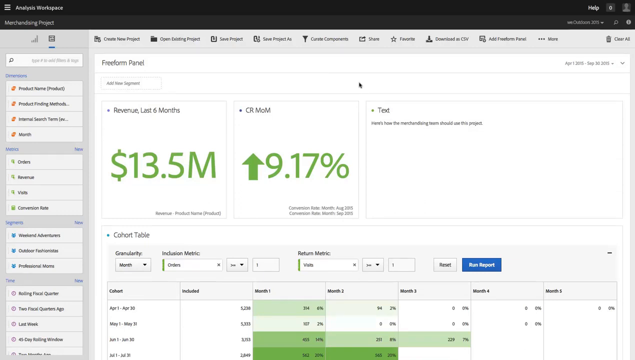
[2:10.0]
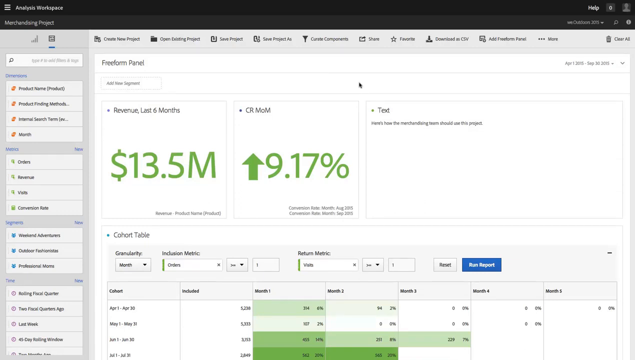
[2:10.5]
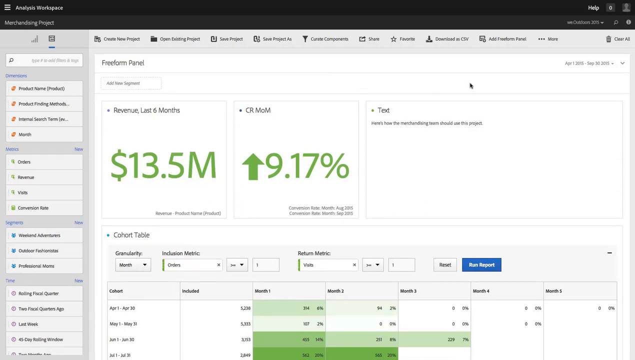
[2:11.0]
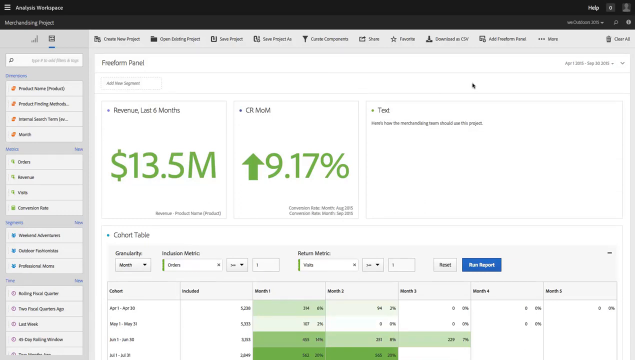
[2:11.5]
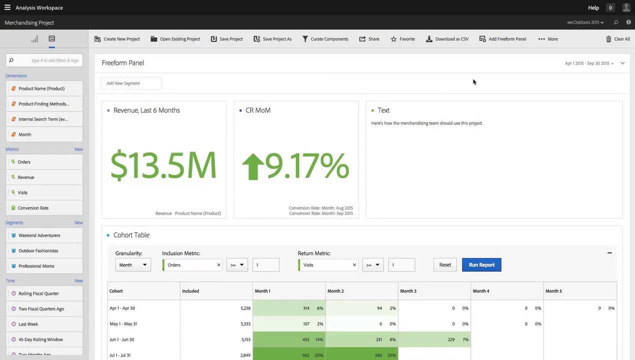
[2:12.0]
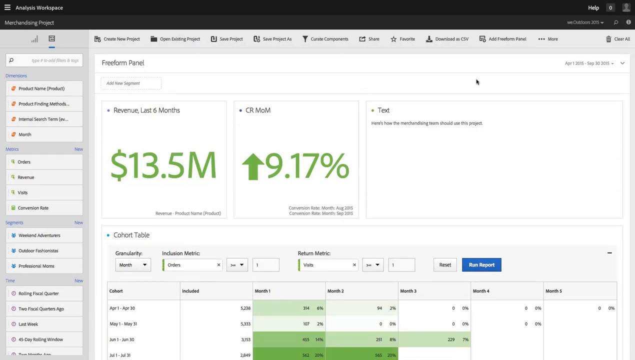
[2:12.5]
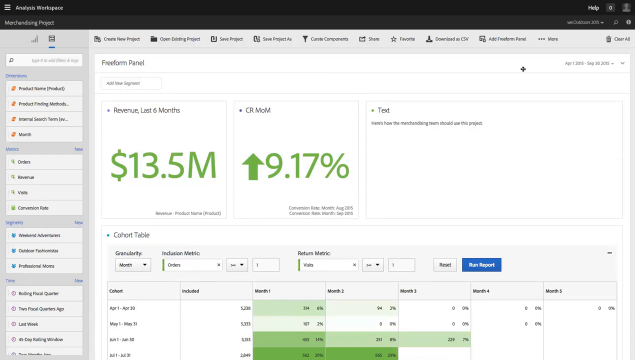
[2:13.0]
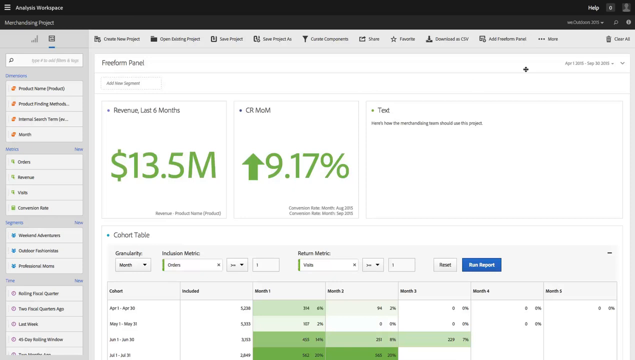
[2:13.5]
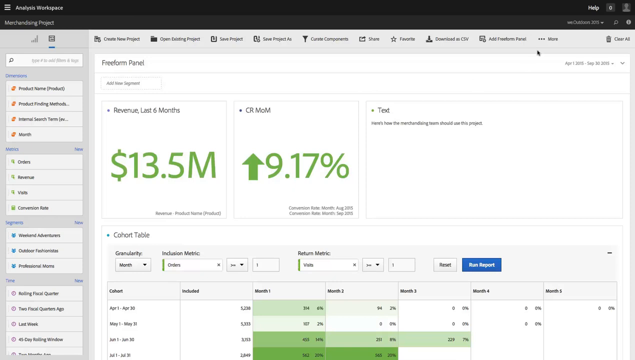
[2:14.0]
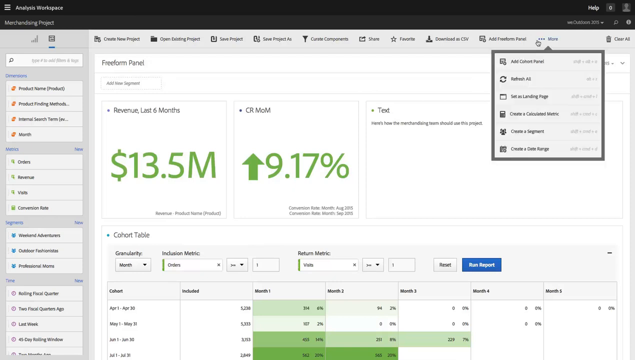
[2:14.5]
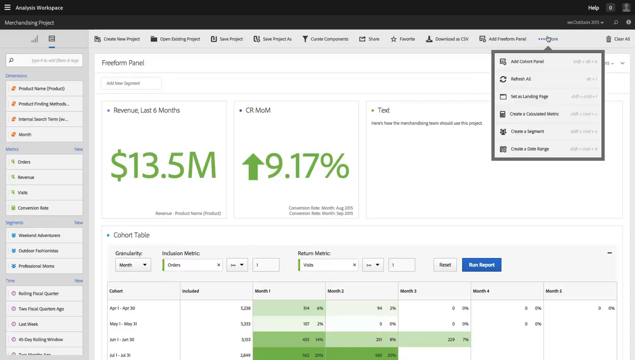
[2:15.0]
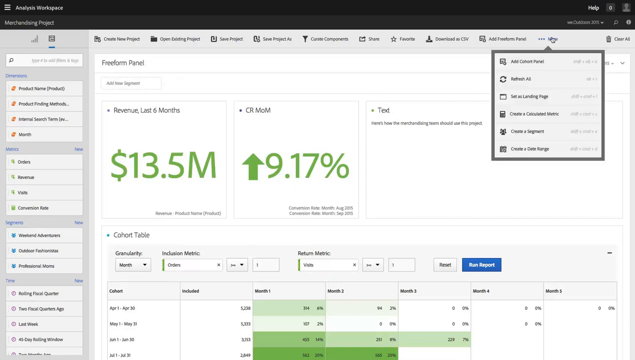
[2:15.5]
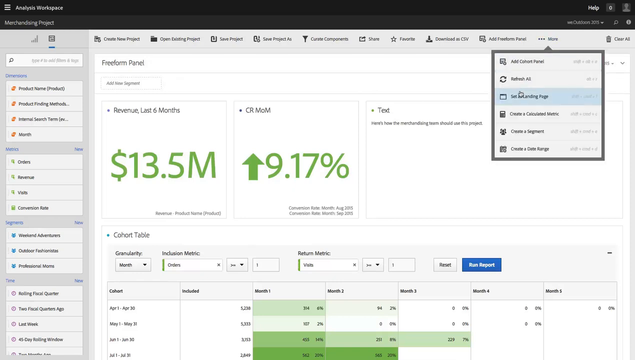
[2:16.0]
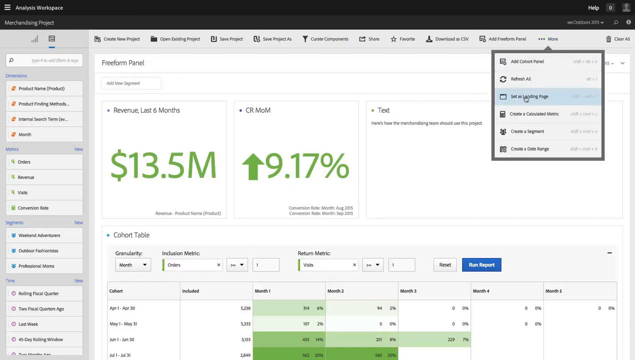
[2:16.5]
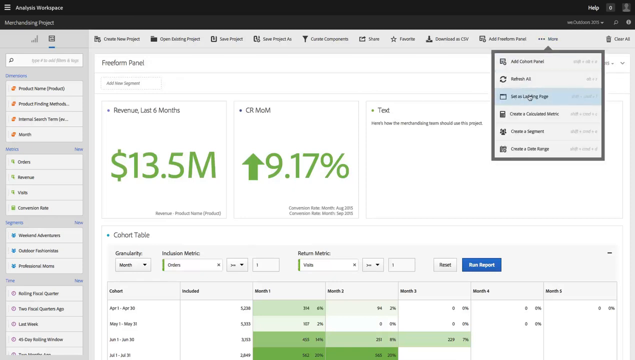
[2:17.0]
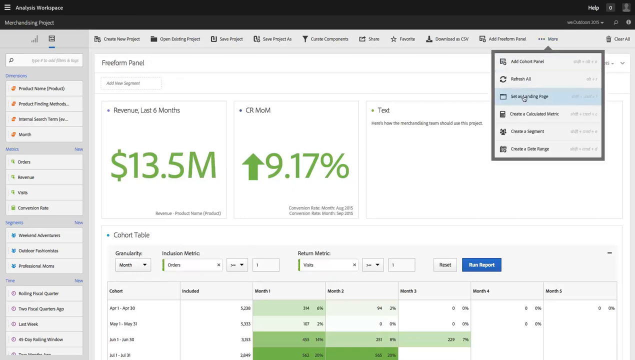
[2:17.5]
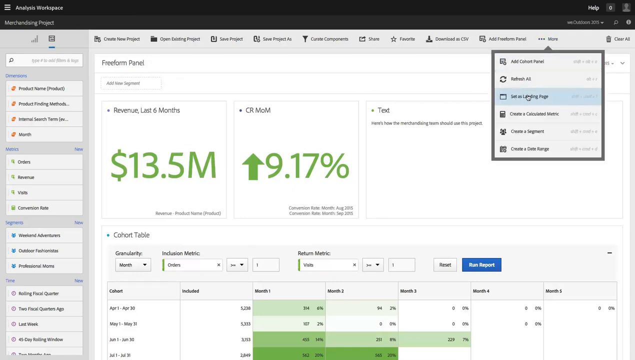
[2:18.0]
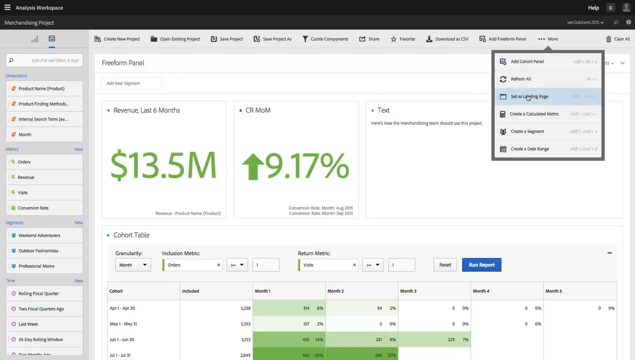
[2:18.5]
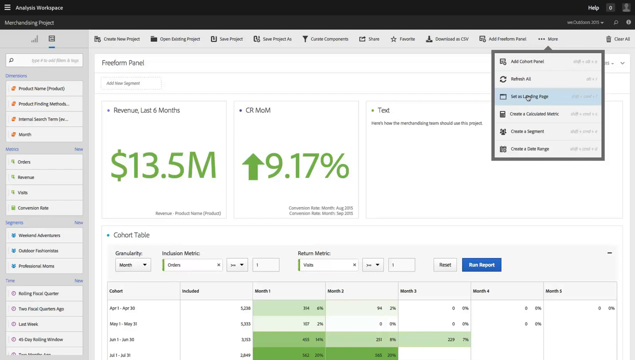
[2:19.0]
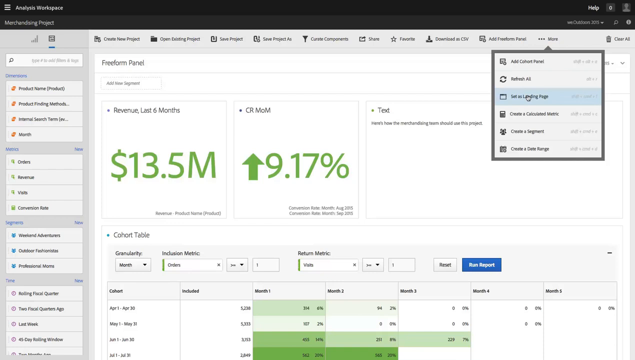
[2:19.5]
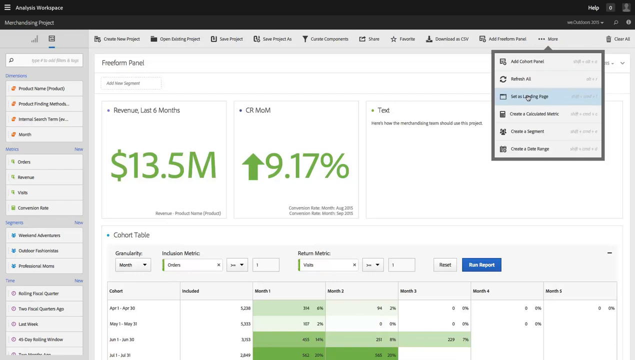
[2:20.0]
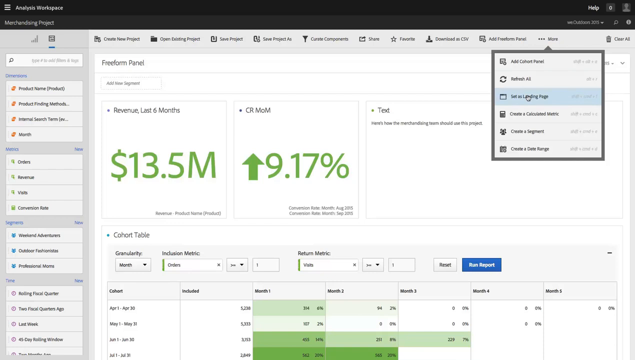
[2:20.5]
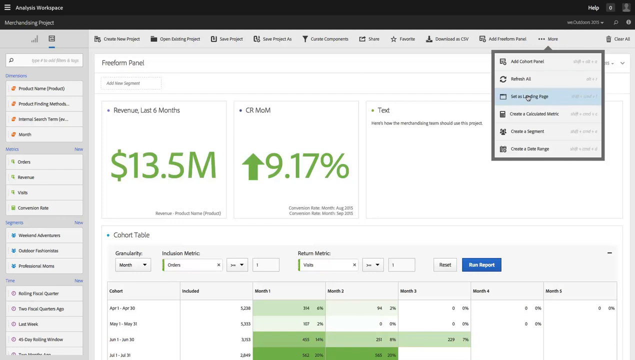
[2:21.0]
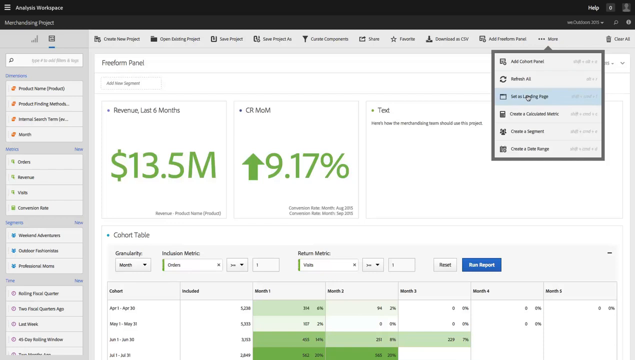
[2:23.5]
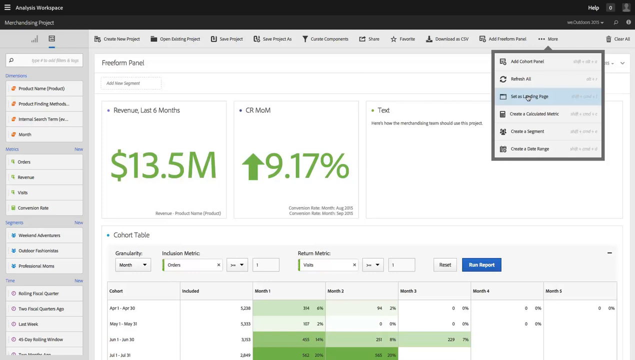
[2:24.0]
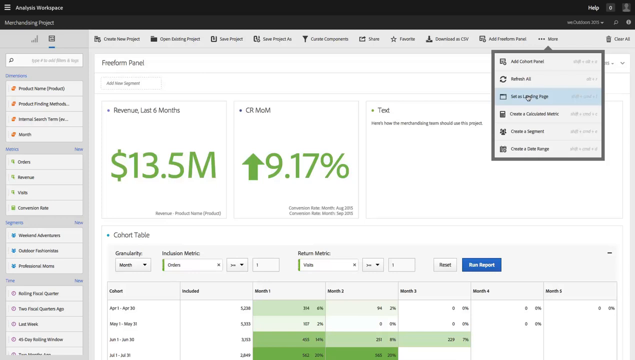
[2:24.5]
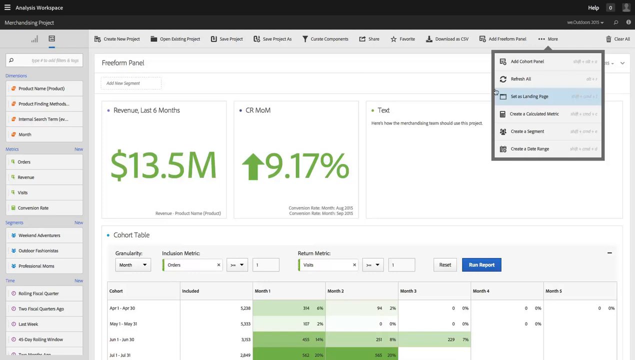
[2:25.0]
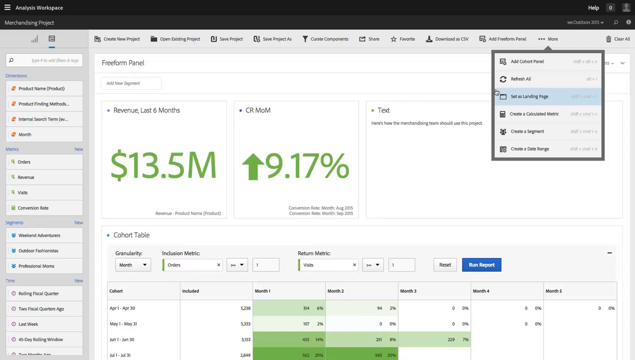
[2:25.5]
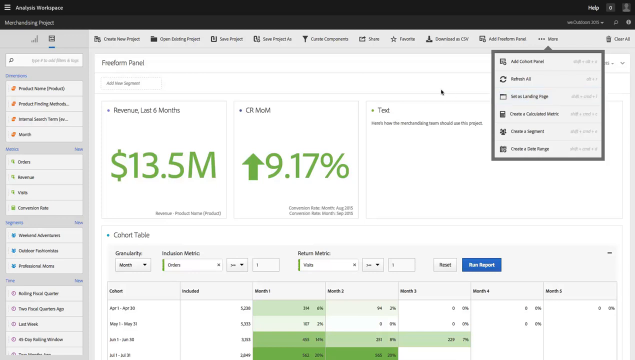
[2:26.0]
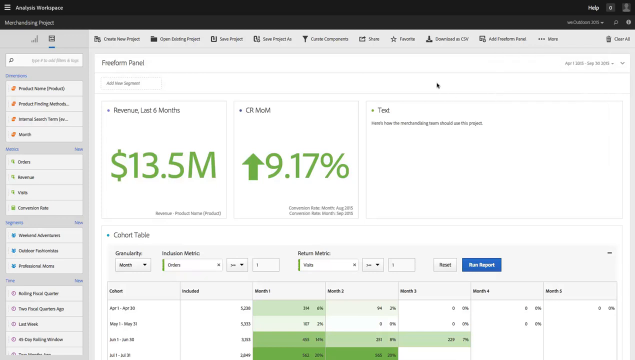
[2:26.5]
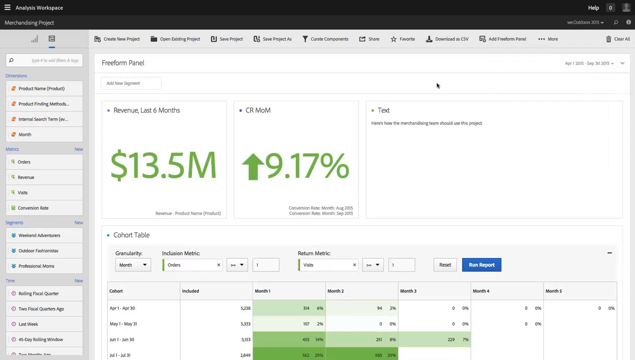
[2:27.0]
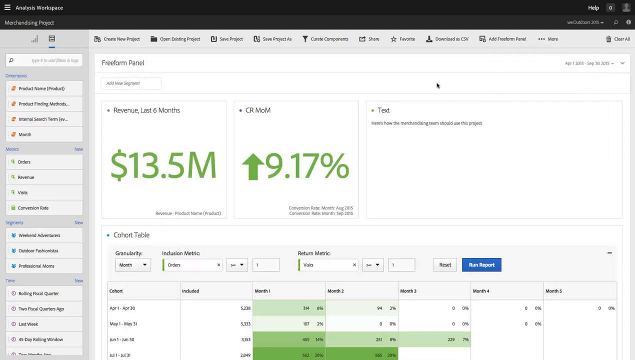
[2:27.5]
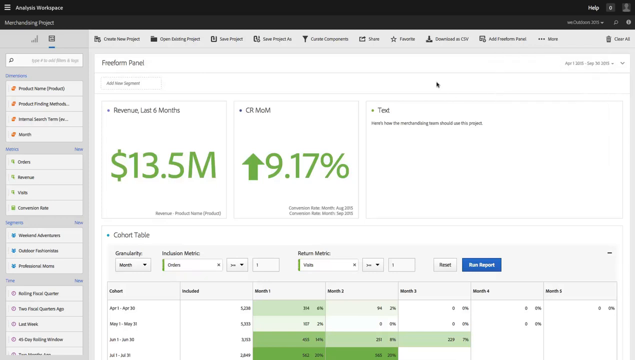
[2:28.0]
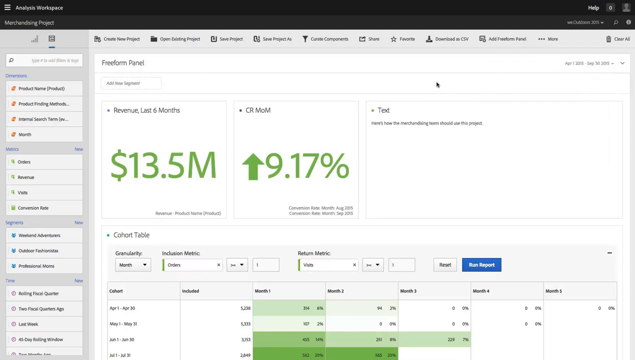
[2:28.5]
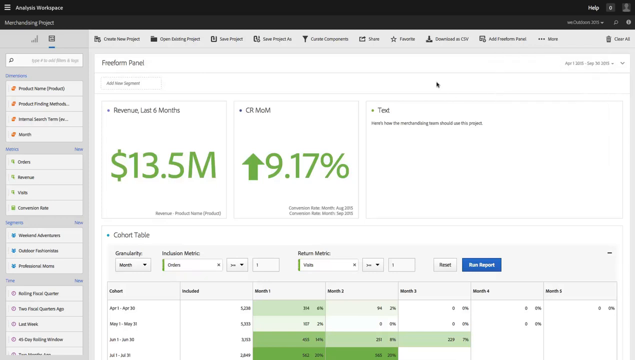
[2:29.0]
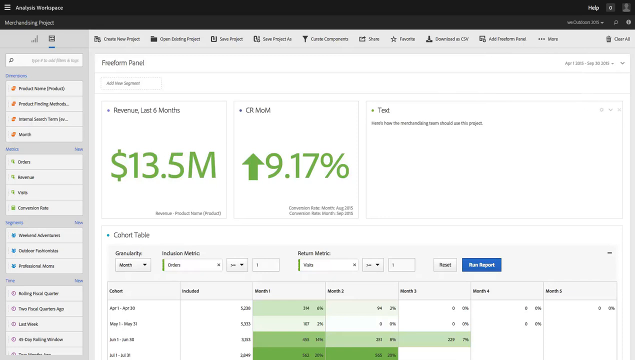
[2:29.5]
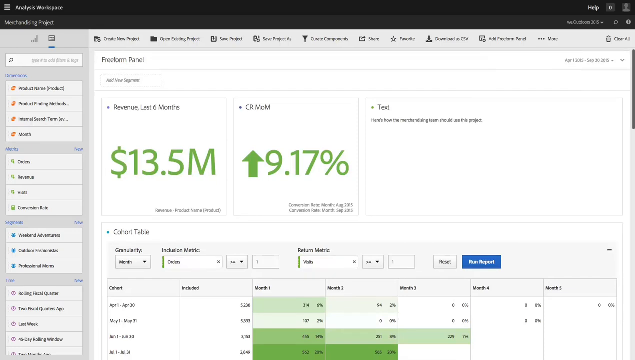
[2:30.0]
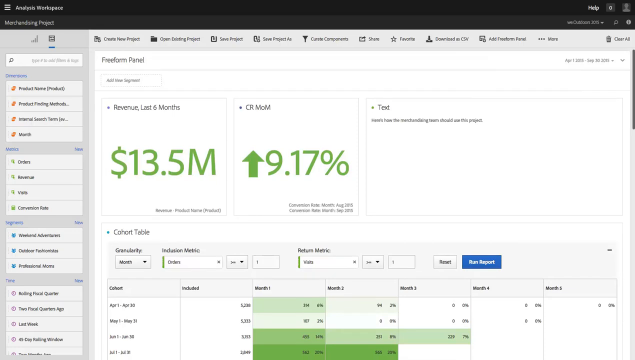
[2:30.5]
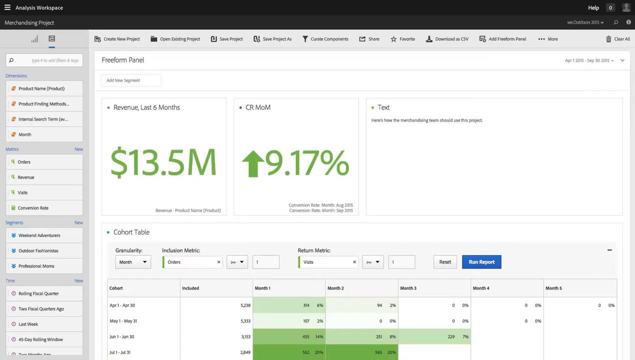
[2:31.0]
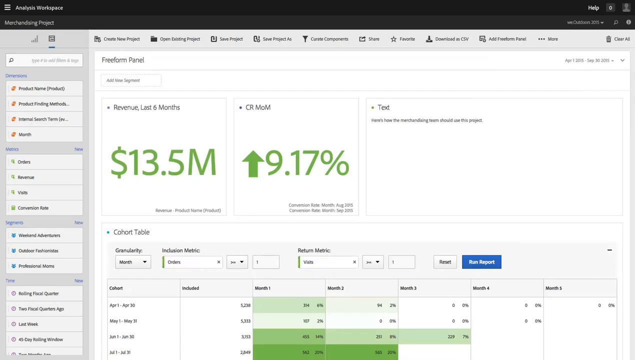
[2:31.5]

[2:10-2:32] The mouse pointer moves progressively to the upper right until it reaches the last of ten options running left to right along the top, hovering over the one that says "More," which brings up a drop-down menu with six options. The pointer hovers over "Set as Landing Page," highlighting it, and kind of quivers left and right over that option multiple times. It stays in the middle of that option, then progressively moves away to the left without seeming to click it, and sits above the "Text" heading in the right-center area. It then moves right to highlight the scroll bar on the far right side before disappearing, and the scroll bar is no longer highlighted either.